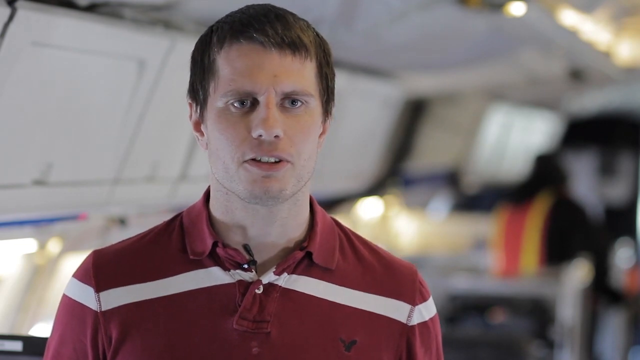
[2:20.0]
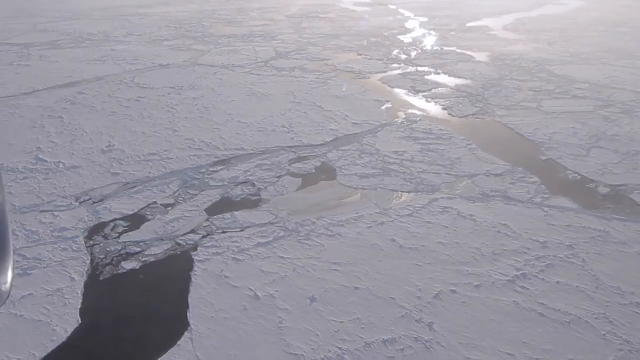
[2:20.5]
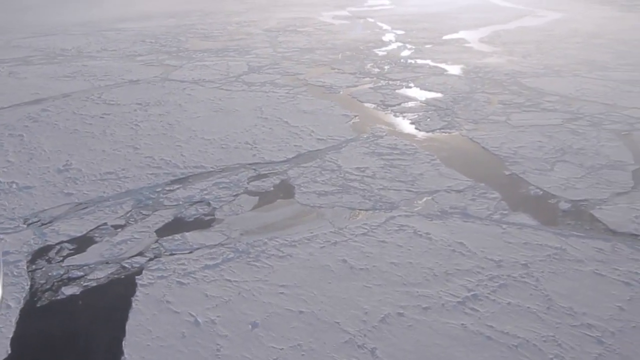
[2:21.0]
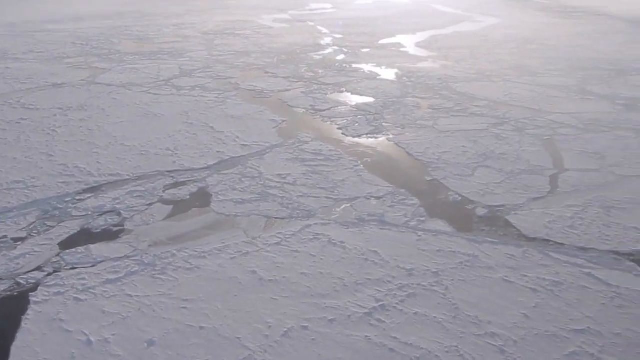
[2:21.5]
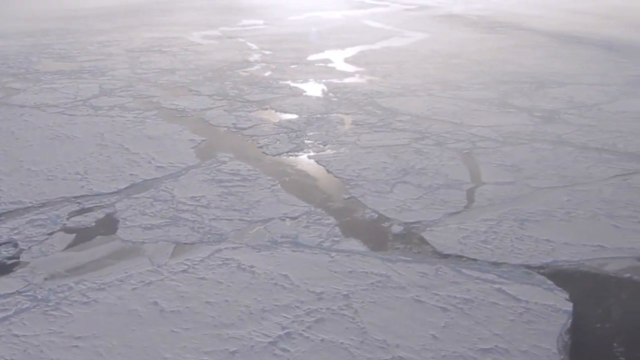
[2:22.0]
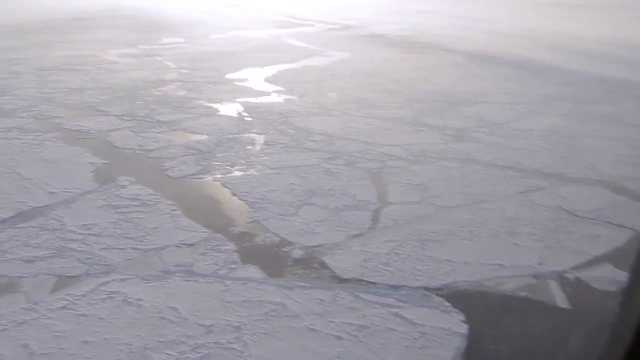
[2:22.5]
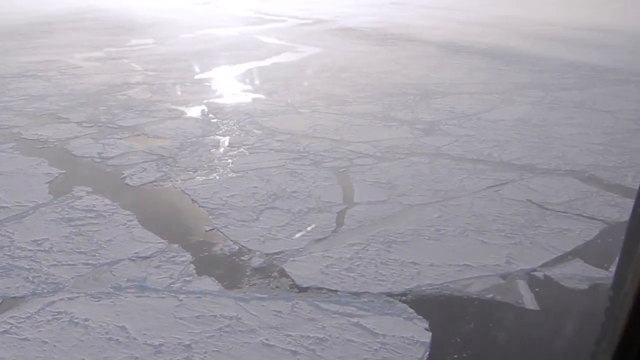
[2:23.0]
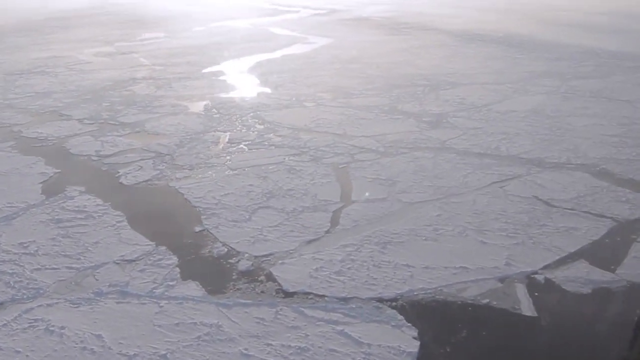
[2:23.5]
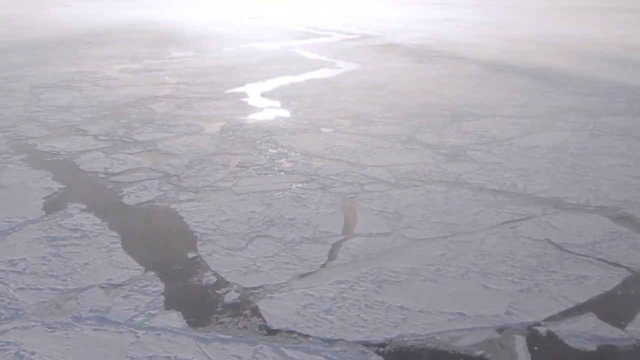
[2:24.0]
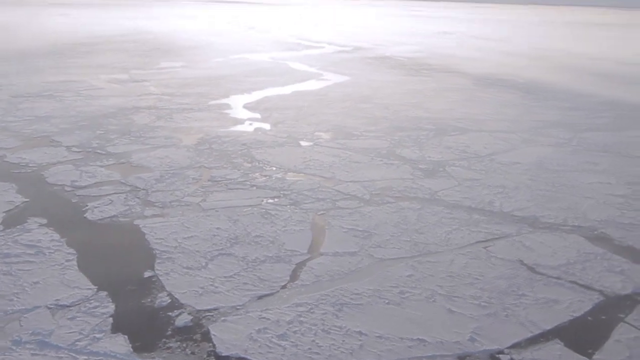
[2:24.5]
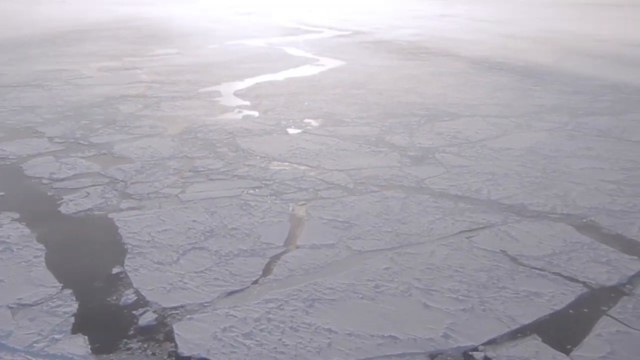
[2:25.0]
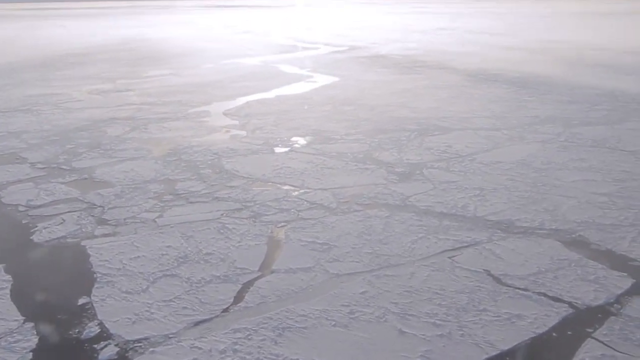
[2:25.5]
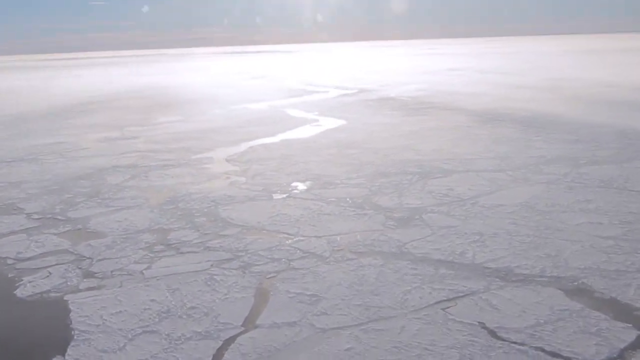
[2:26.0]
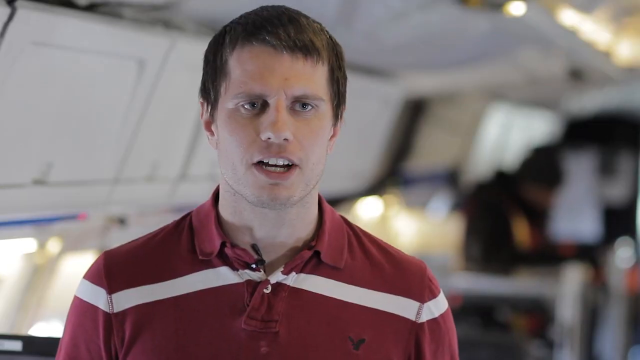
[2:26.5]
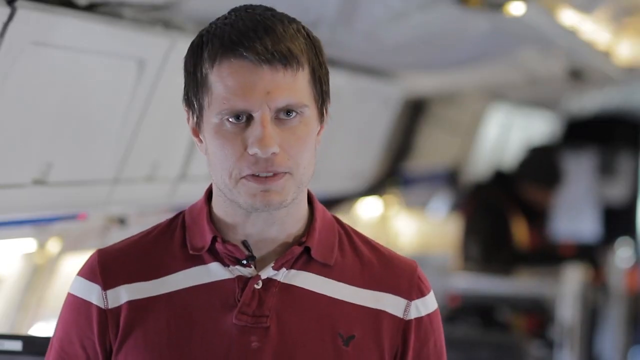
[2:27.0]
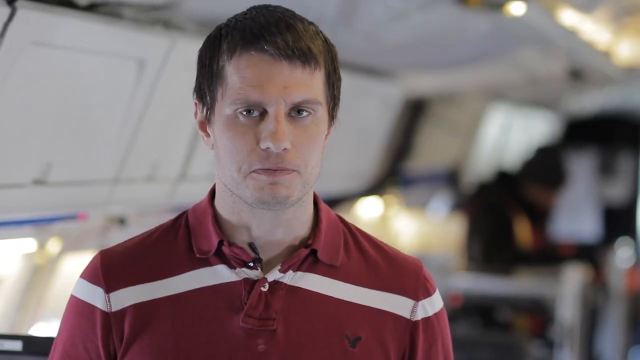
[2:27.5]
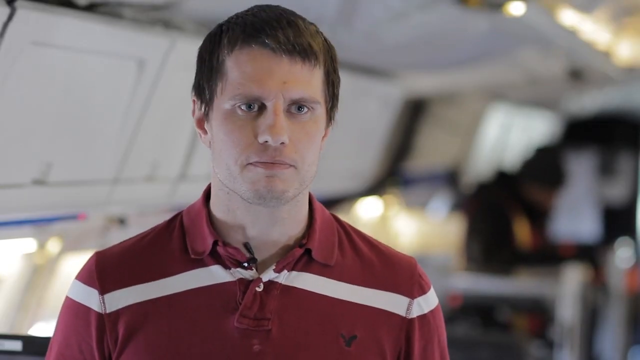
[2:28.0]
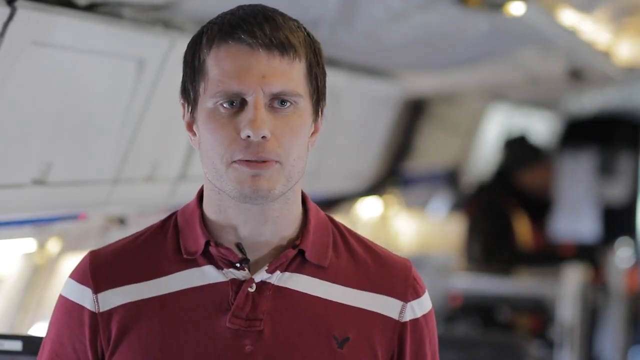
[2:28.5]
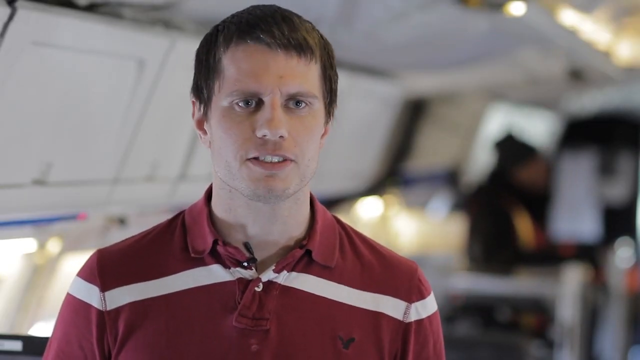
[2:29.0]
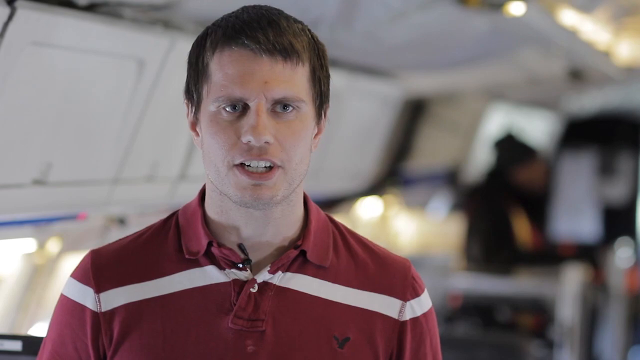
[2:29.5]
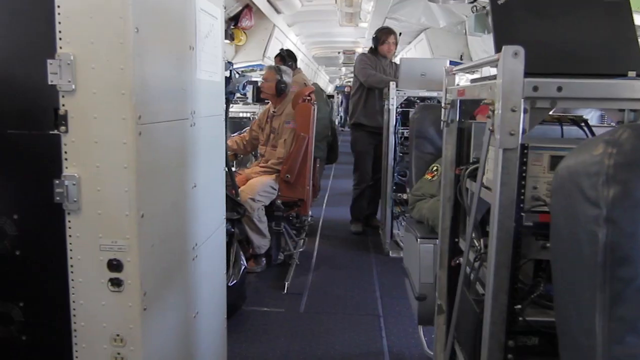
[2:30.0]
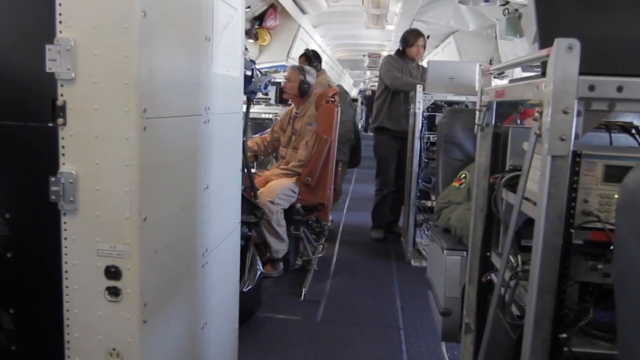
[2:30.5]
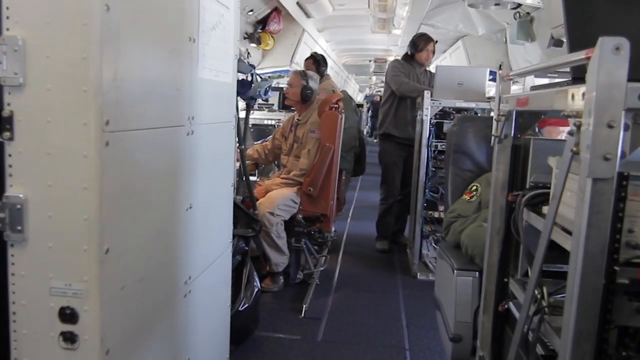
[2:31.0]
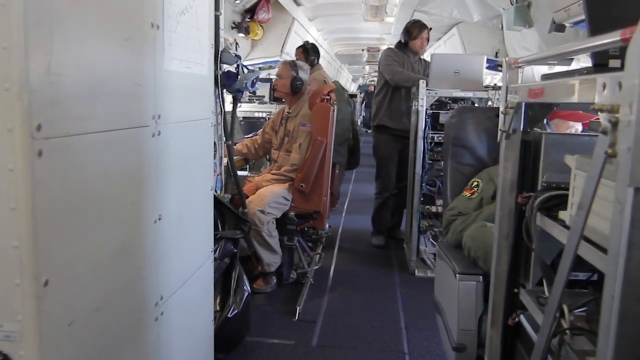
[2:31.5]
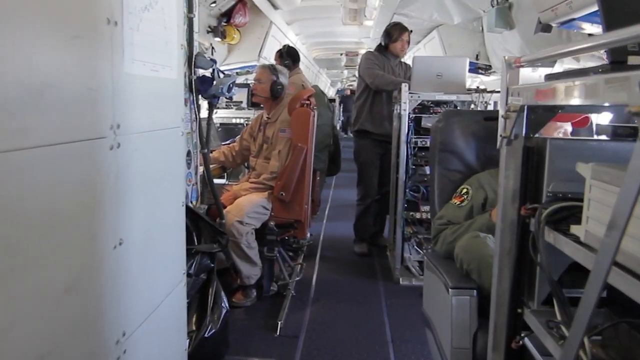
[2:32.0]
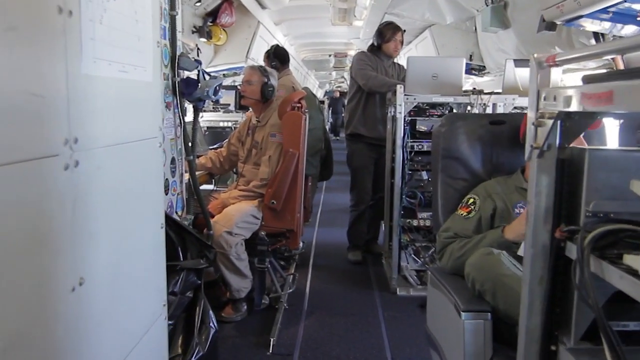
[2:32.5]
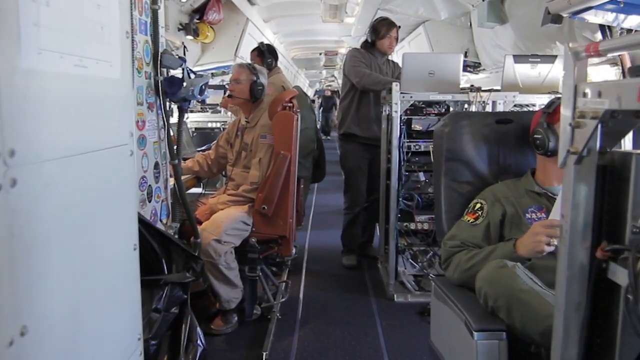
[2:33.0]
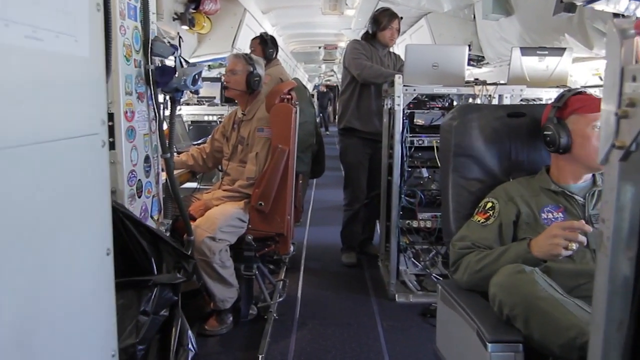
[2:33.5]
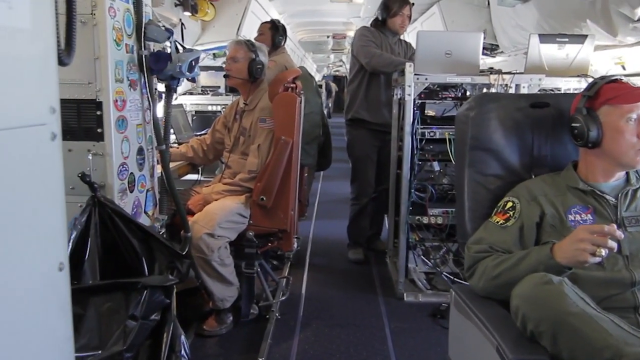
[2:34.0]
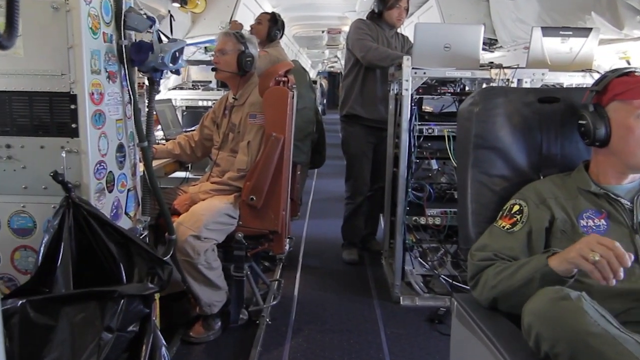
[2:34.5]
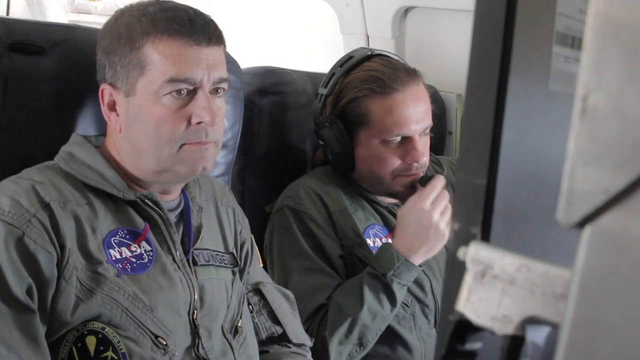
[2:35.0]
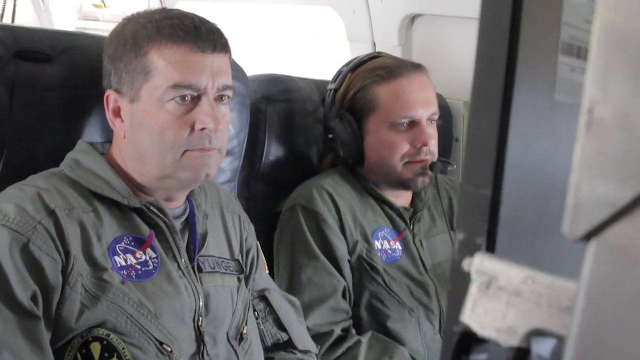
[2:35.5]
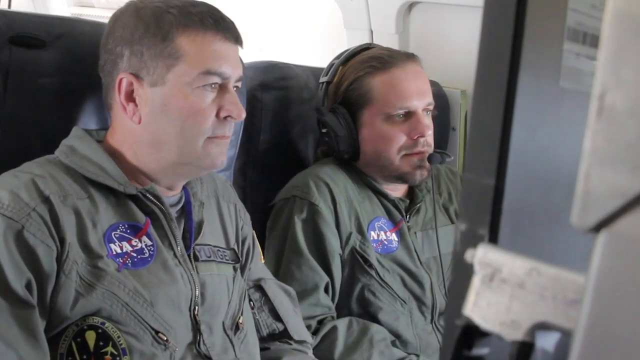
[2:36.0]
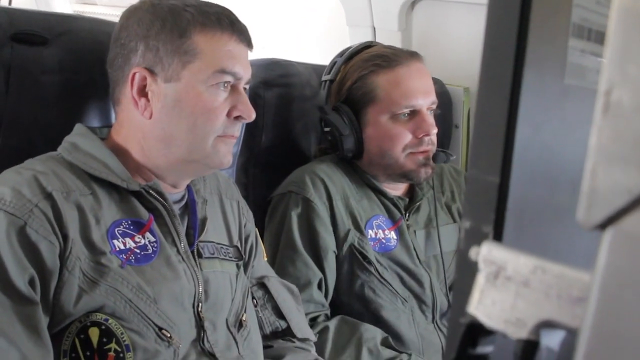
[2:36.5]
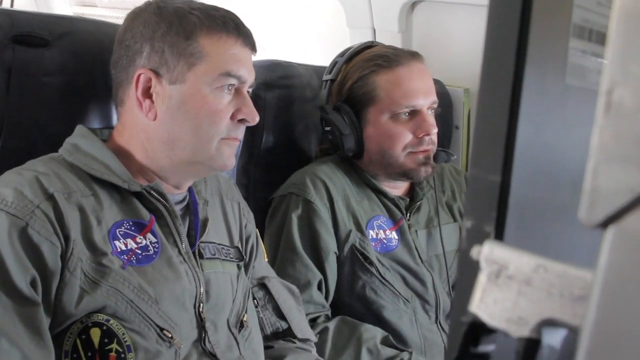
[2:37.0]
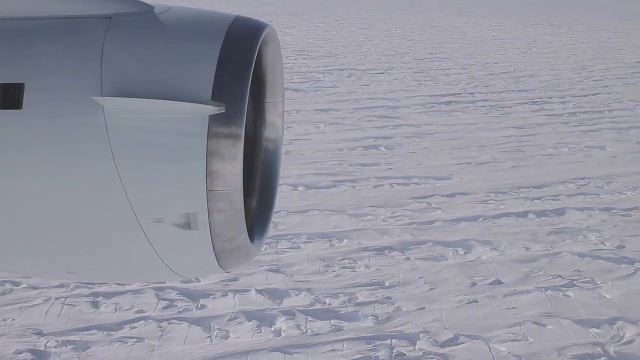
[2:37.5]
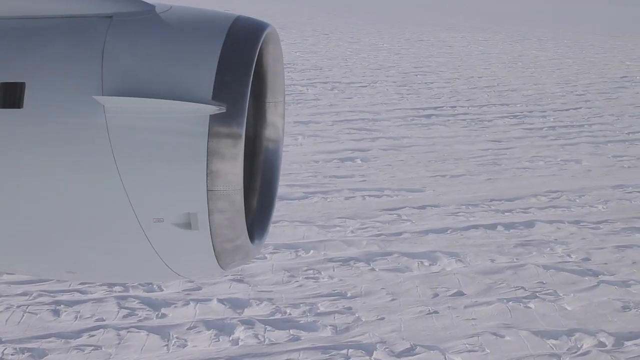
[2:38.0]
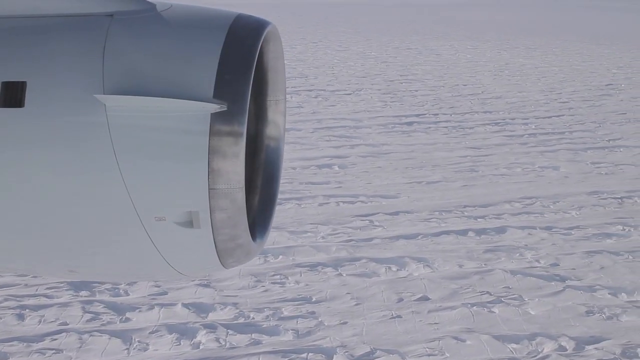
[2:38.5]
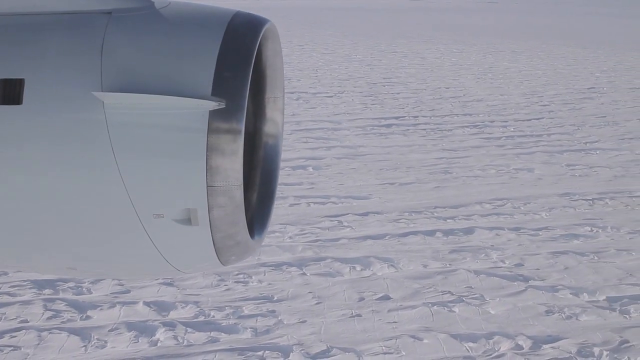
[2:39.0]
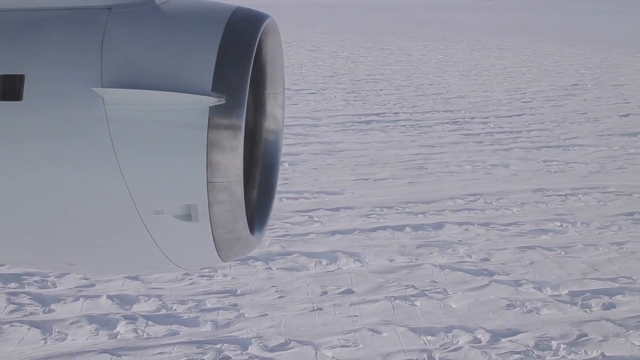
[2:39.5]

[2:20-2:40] A Caucasian man talks, with a microphone on his collar and people behind him wearing construction utility vests, inside some type of aircraft. An aerial view from an airplane shows a lot of snow and ice, with what looks like a lot of it melting; a bit of sunlight shows it is daytime. The man returns to the screen, talking. Inside the aircraft there are multiple people wearing headsets and a lot of tech machinery, and mostly everybody wears NASA jumpsuits. The outside of the plane, which is white, is then shown.